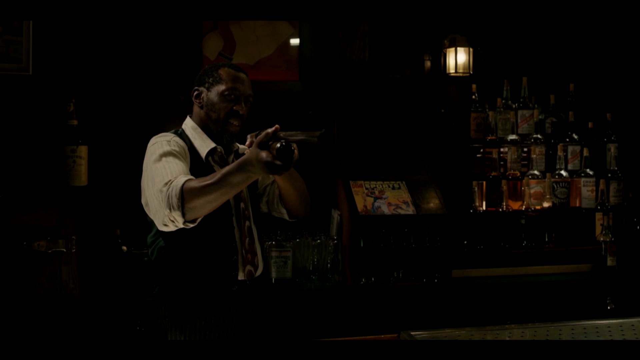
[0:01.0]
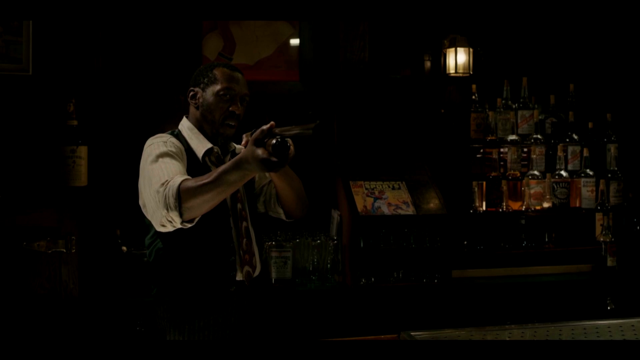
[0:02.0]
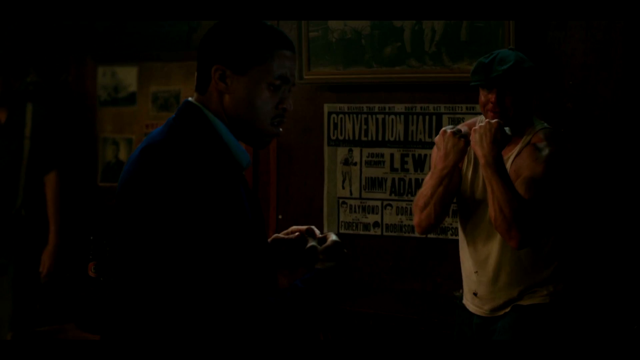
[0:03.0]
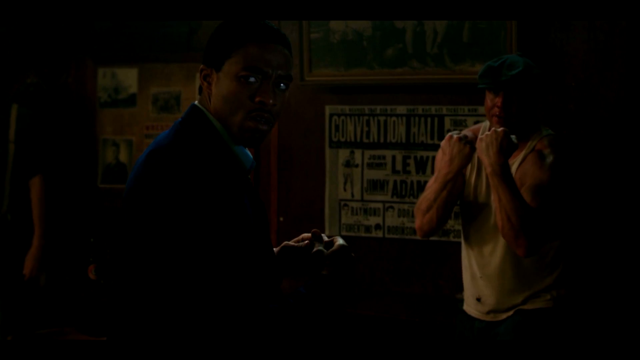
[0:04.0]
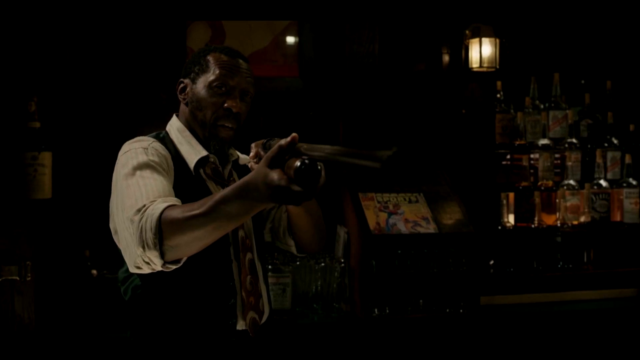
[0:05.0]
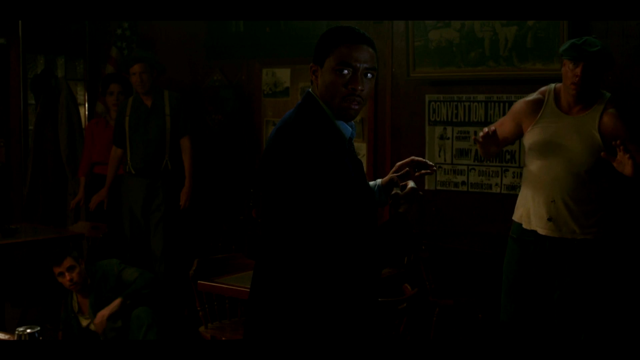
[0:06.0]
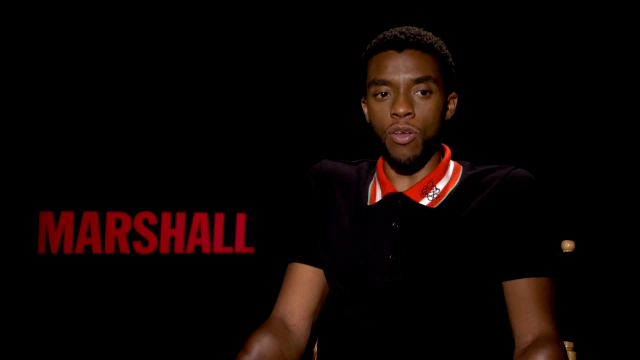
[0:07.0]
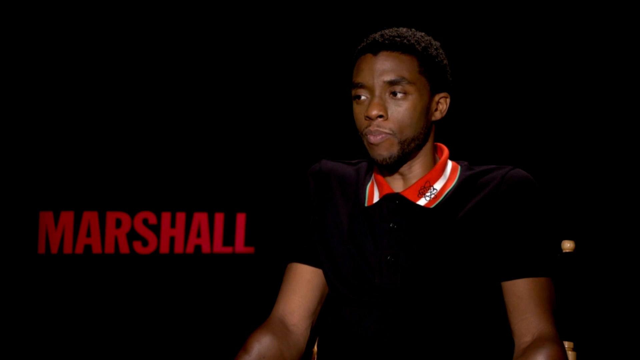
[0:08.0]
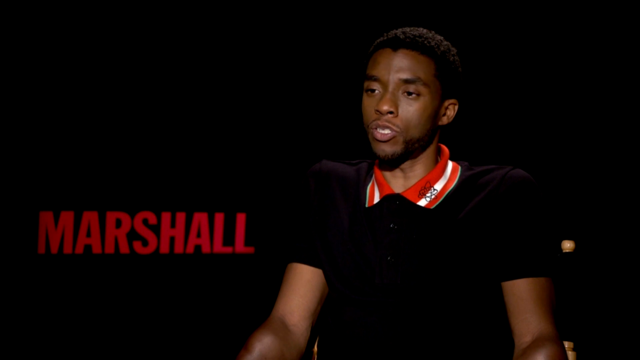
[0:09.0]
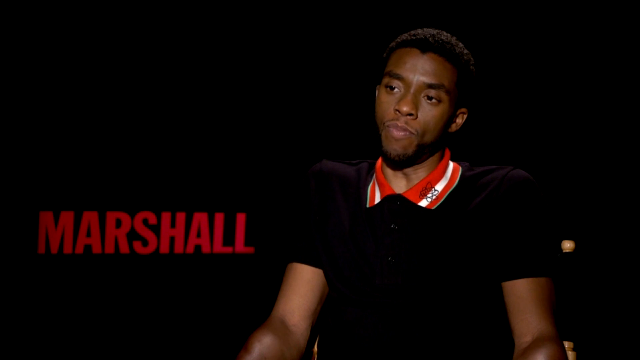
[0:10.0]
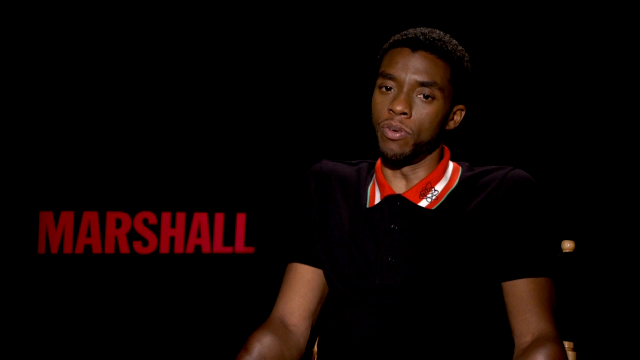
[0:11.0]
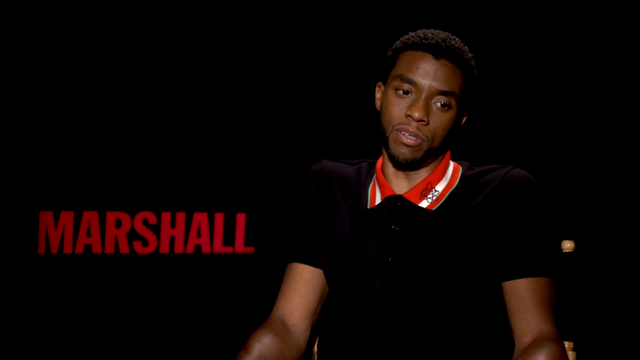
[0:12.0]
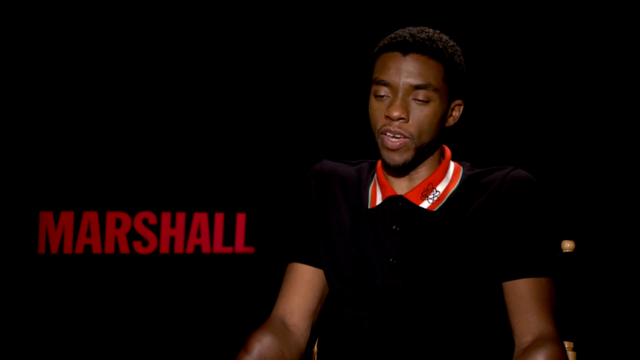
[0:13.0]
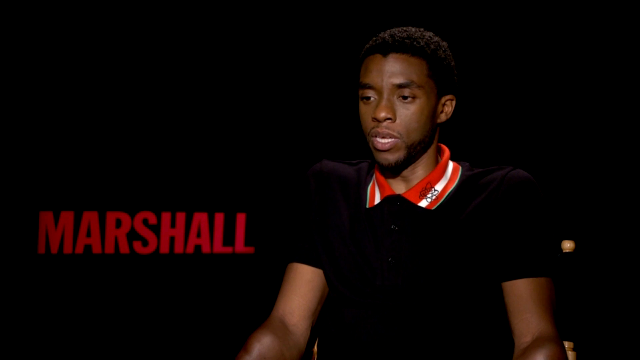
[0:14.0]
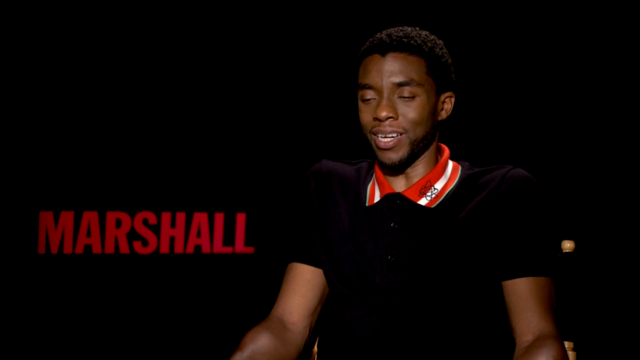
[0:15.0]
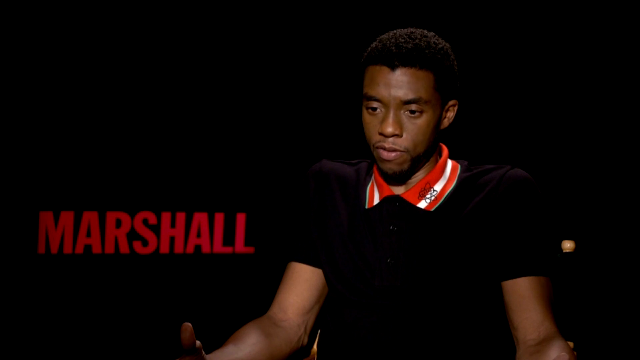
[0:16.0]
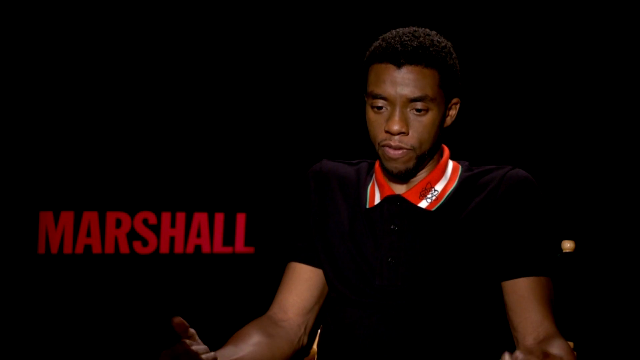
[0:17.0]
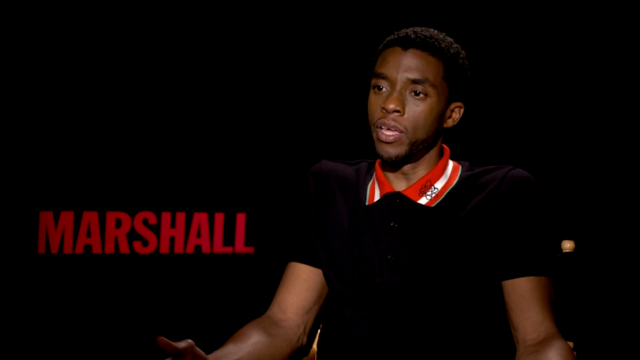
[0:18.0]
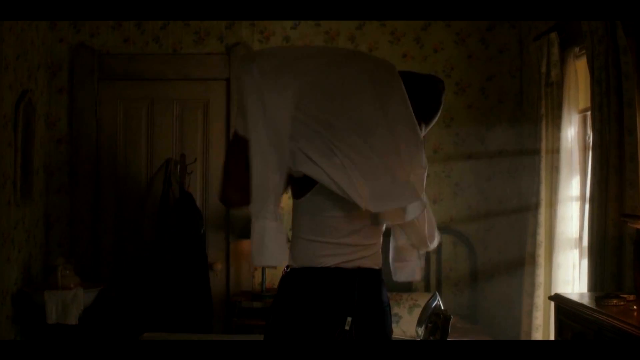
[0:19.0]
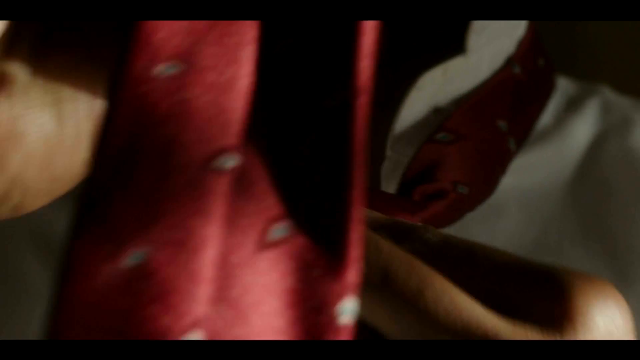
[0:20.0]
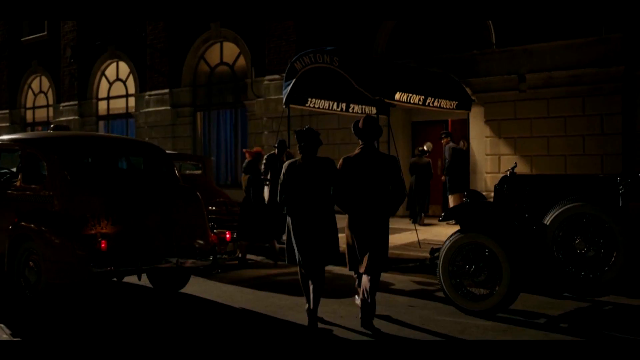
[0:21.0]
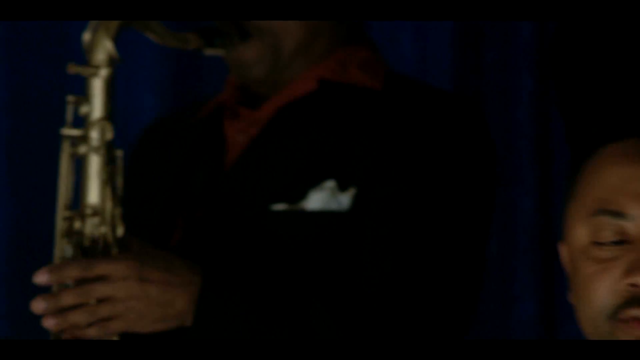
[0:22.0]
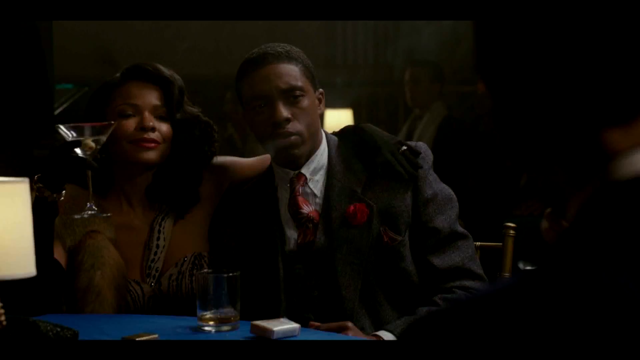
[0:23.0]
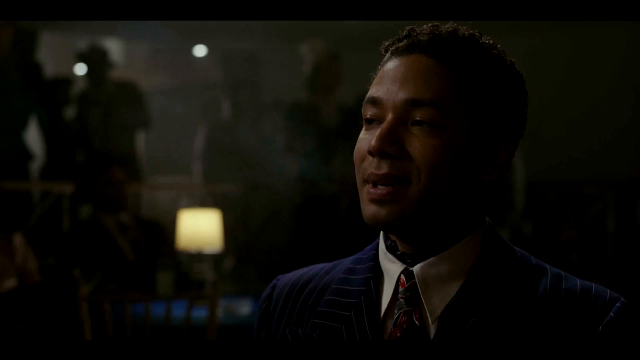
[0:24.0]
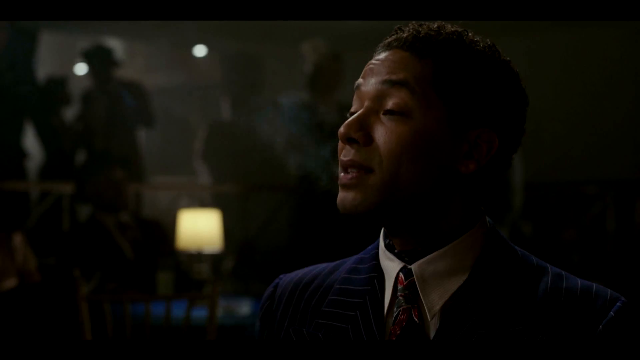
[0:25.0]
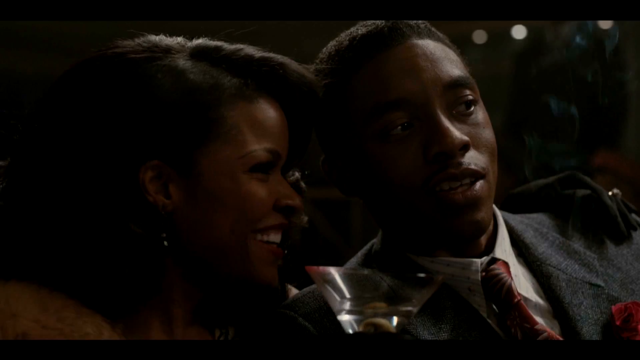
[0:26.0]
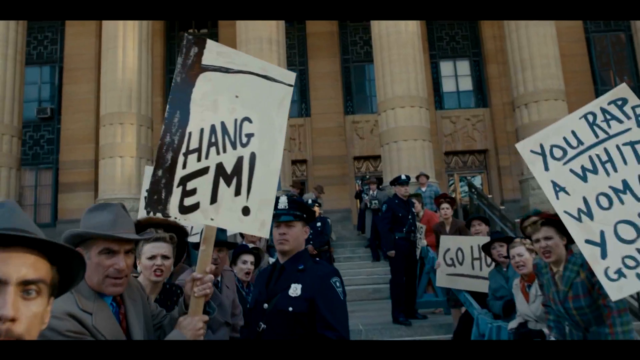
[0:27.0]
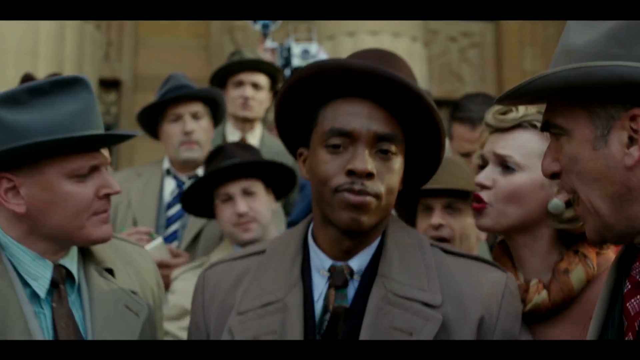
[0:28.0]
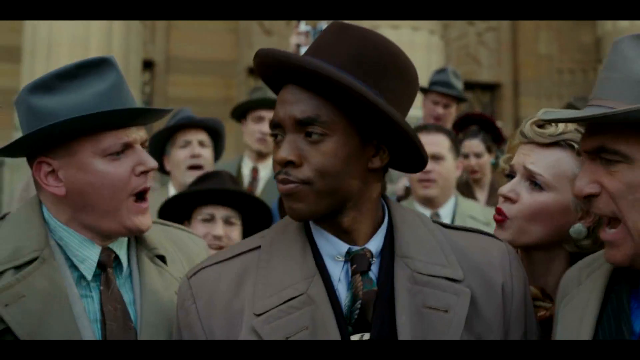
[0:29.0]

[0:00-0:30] A scene shows a man pointing a gun at someone else; they seem to be in some sort of bar. He appears to hold a shotgun with both hands and points it at a man in the corner who wears a tank top and is very muscular. The video then cuts to an interview-style shot of an actor from the movie, talking while seated. At the bottom left of where he is sitting, red text reads "Marshall", apparently the name of the movie. More scenes from the movie follow, showing him in a black suit, hanging out in a high-class environment. Signs around him read "hang him", "go home" and "you rape a white woman", and another sign says "women" with an arrow.